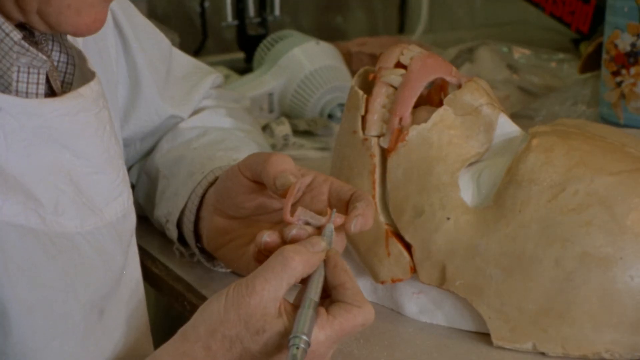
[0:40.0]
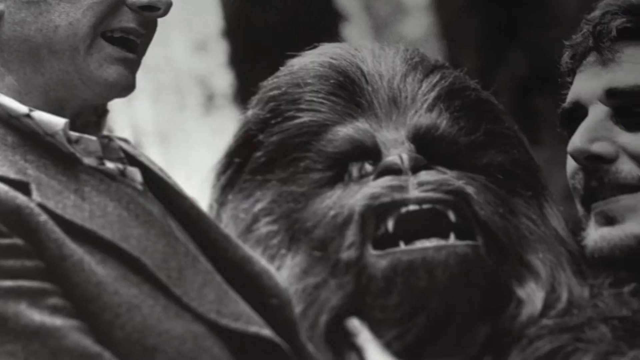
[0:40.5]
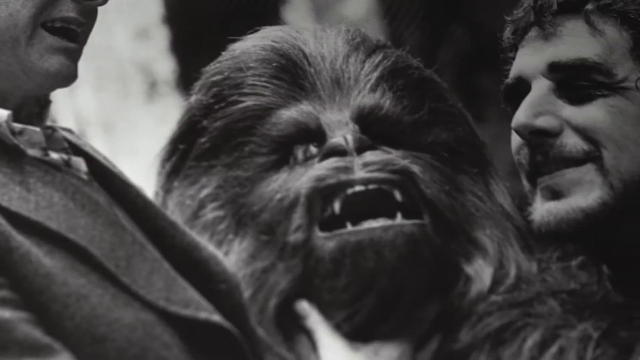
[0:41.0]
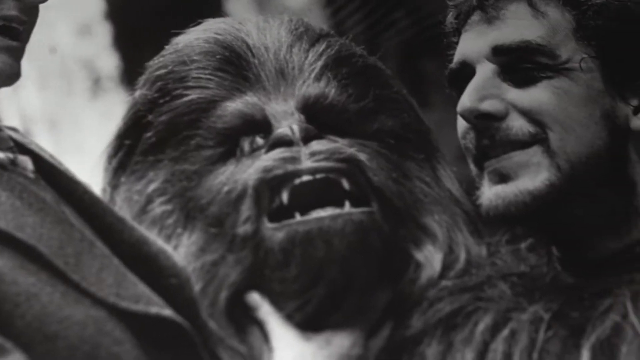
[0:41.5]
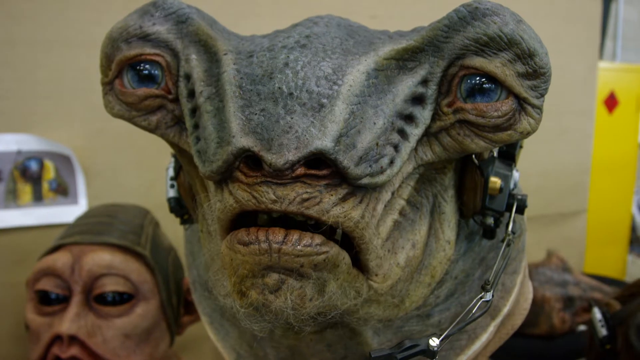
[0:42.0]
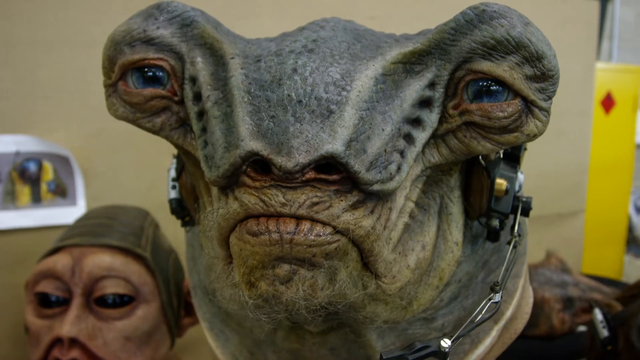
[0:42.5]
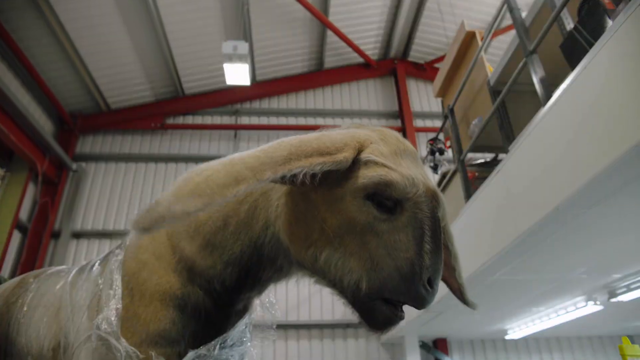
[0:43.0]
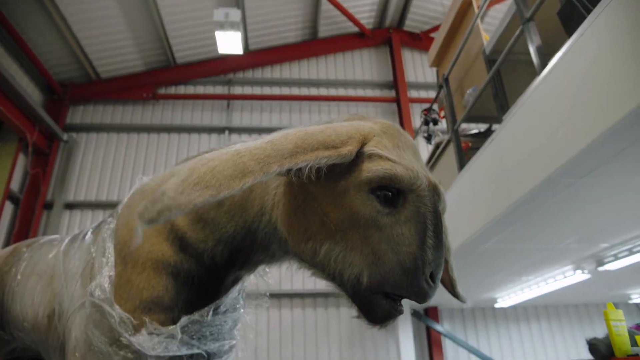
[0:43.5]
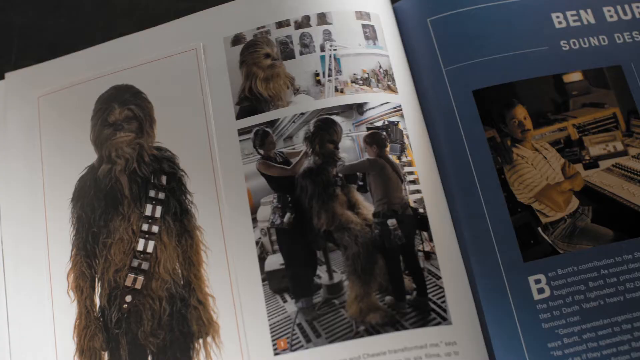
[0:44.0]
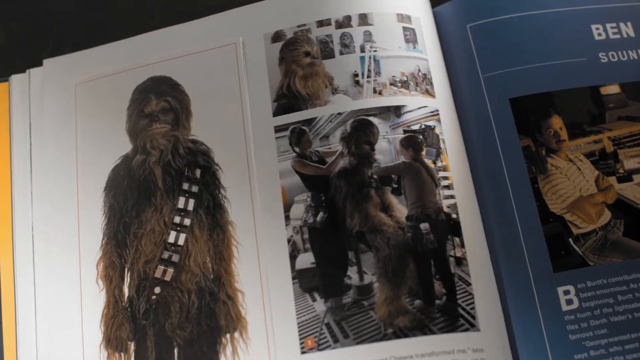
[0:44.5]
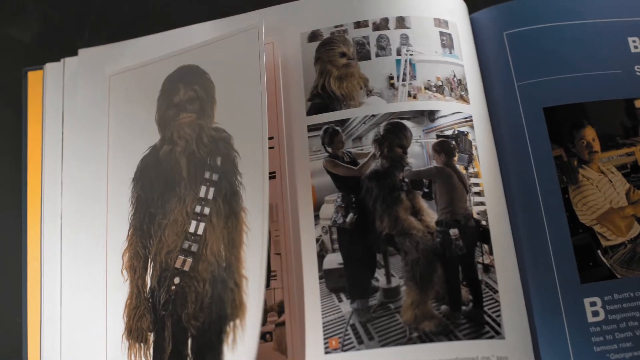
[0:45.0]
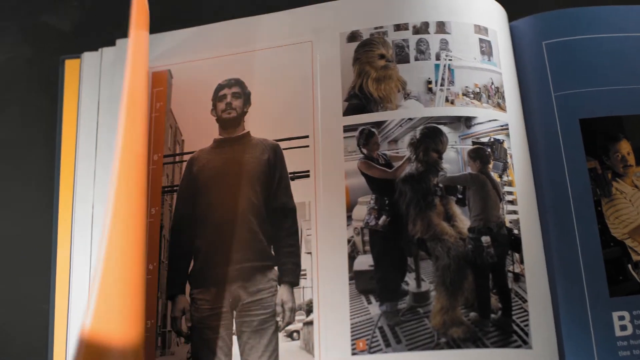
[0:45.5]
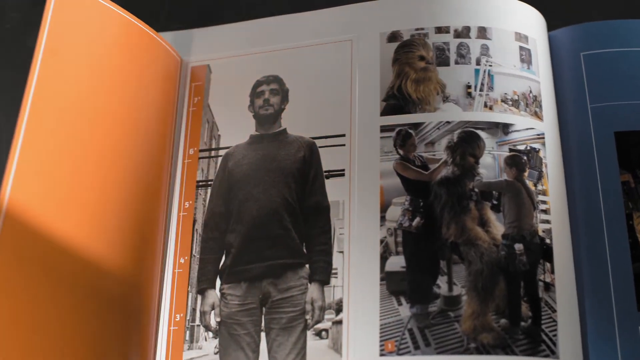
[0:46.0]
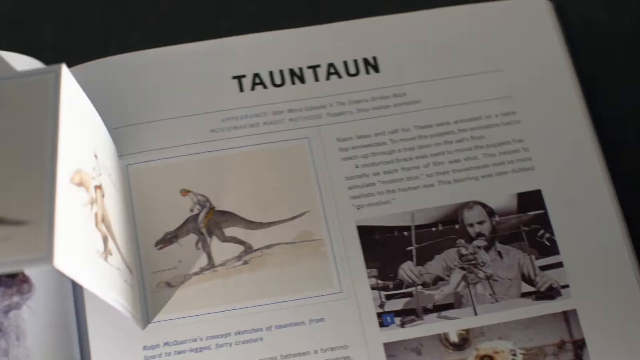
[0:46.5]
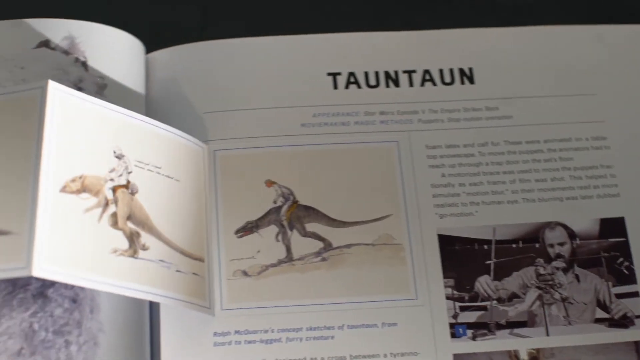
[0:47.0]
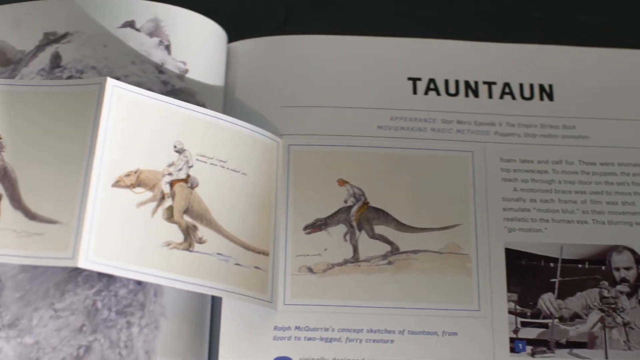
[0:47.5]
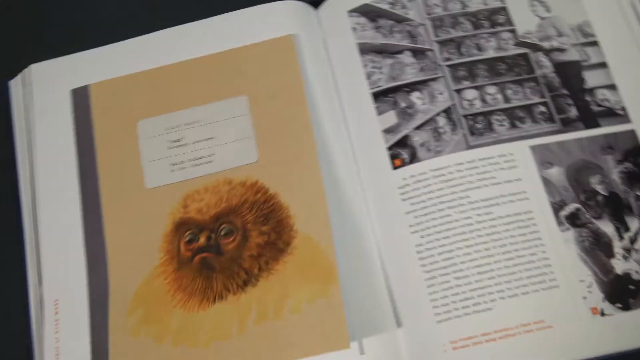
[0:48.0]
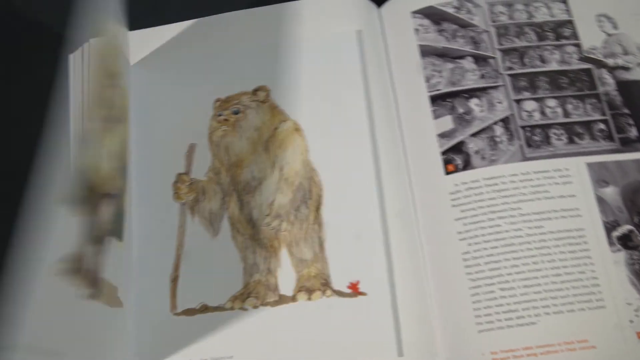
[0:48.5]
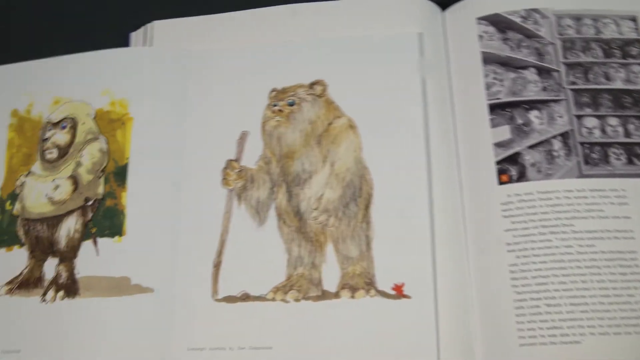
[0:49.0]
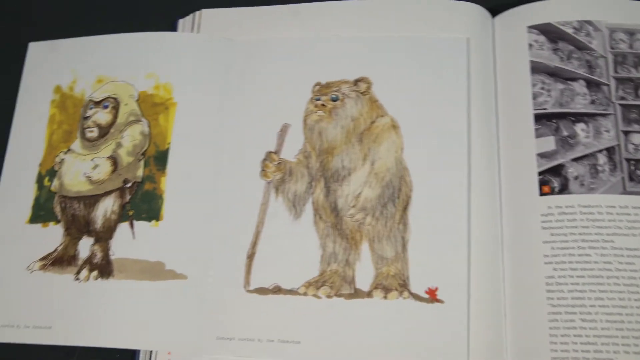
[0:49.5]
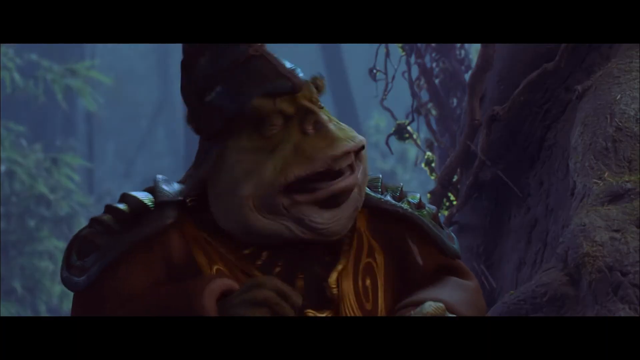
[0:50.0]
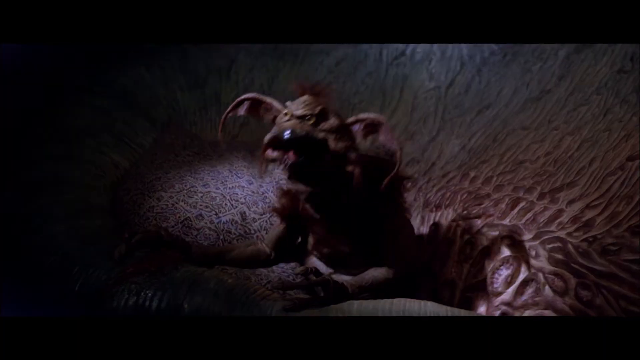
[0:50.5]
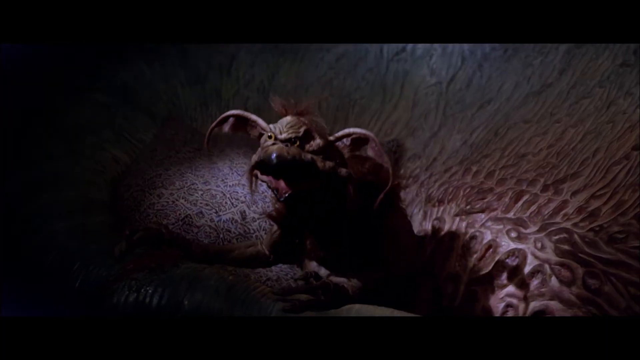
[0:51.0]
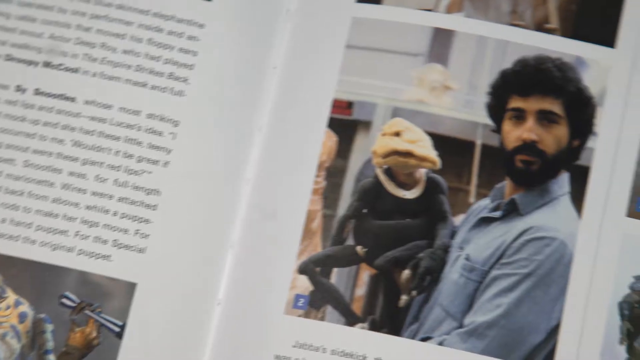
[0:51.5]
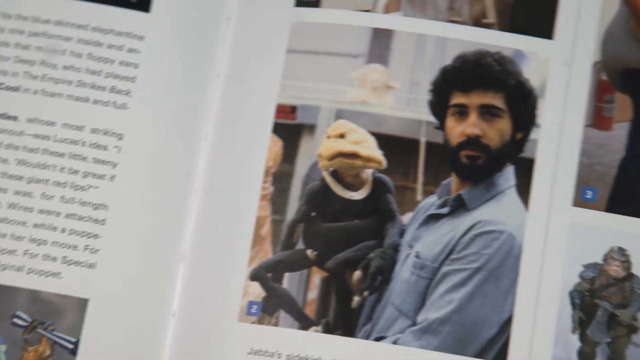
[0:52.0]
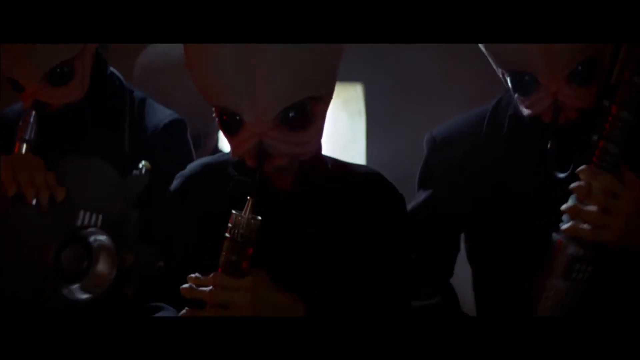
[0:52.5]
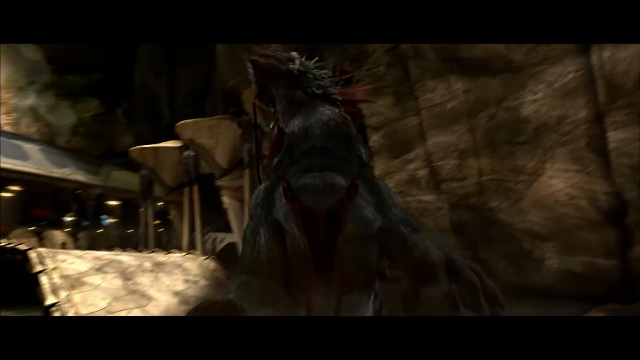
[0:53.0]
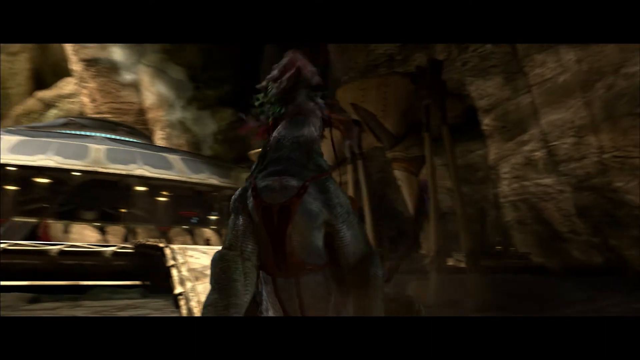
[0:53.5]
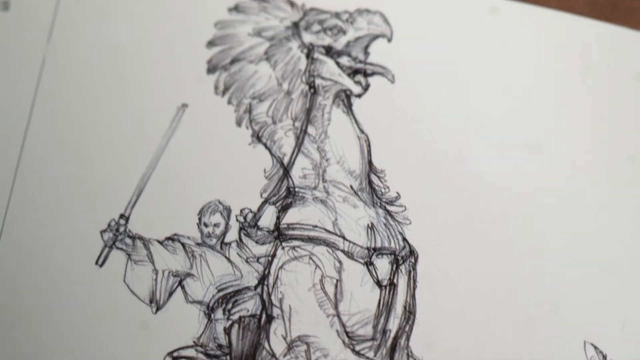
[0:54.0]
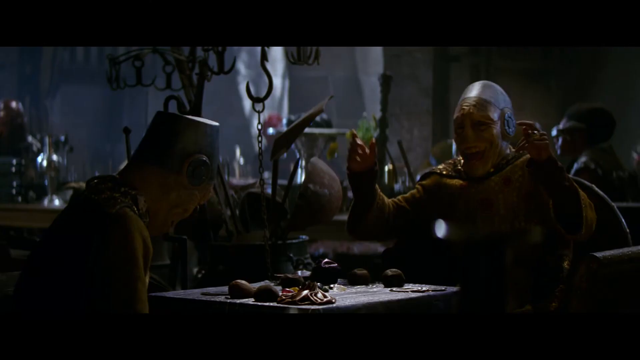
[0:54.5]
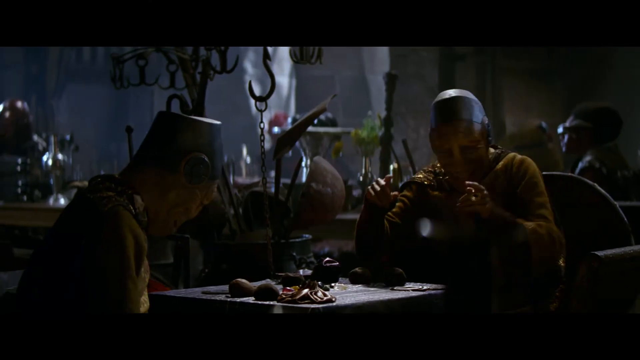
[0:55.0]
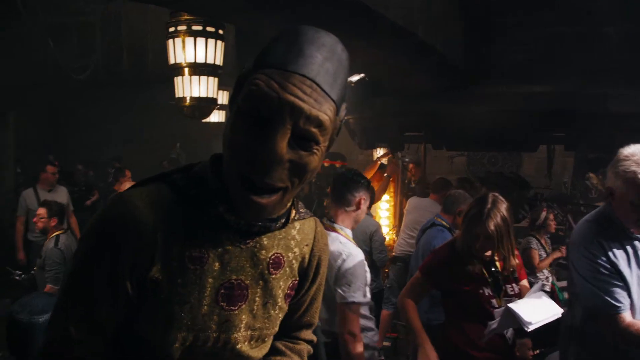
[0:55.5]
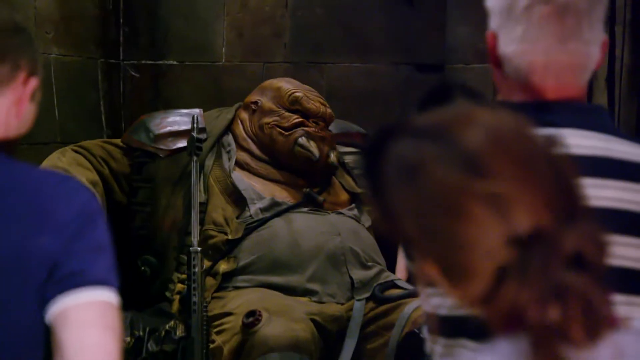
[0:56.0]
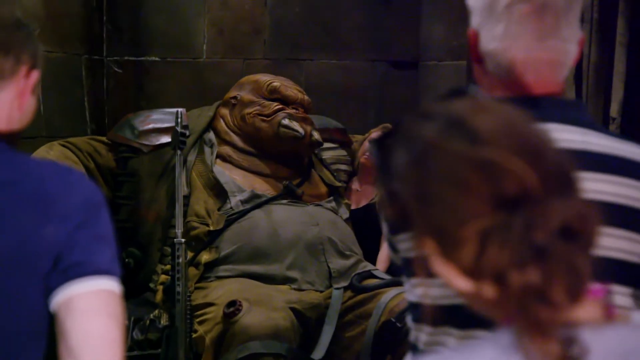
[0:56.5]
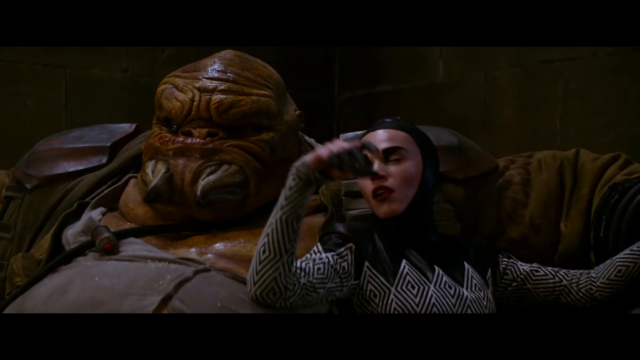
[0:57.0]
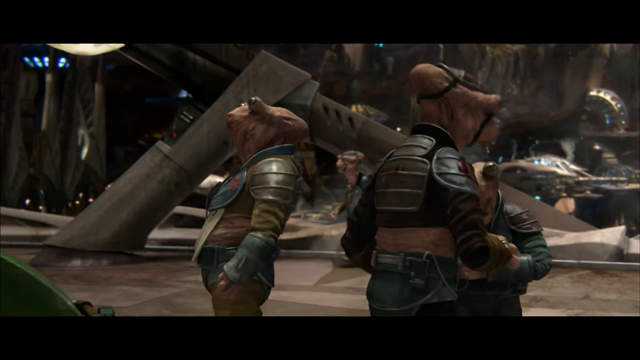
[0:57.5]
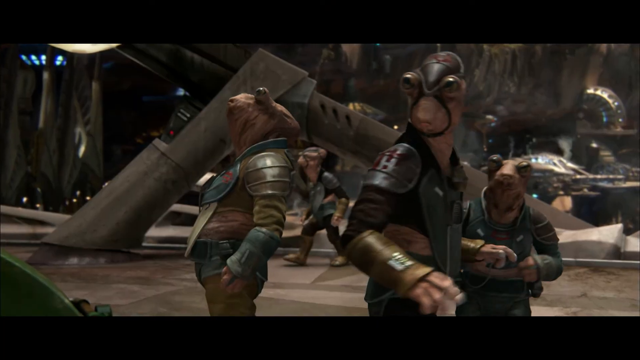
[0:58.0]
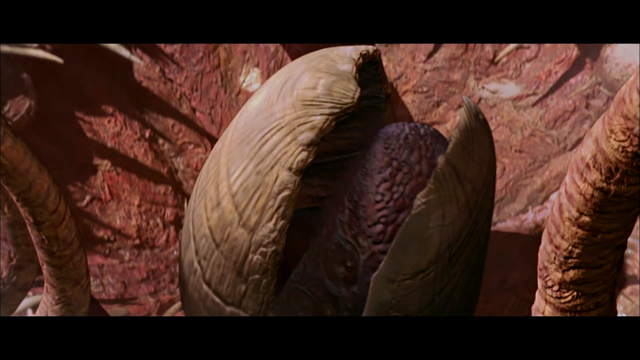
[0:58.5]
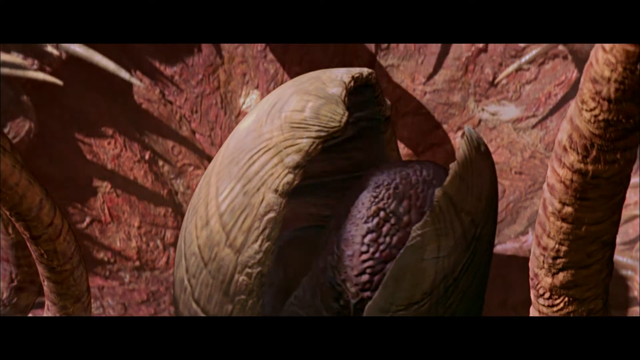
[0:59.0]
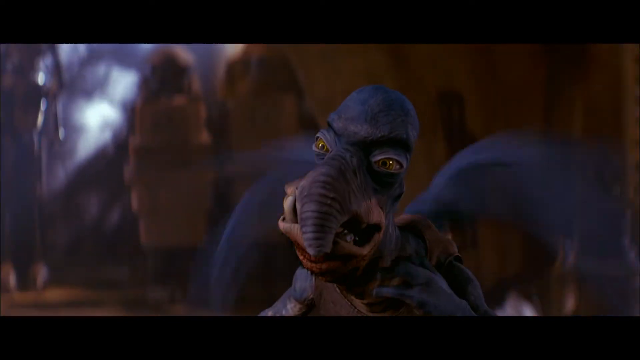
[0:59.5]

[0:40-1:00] A black and white picture shows Tsubasa, a furry Star Wars character, with two men smiling beside him. Next comes a robot-like creature with very wide-apart eyes and very thick skin, then a different, sheep-like creature in a tall building. A book page shows diagrams of Tsubasa, some giant rat-like creatures, Ewoks, and some characters from Star Wars Episode I. Further pictures from the book show other alien-like creatures, along with their real-life counterparts from the live-action Star Wars movies, such as creatures that fly with purple wings. One of these flying creatures, featured in Star Wars Episode I, the Phantom Menace, has small eyes and an elephant-like nose.